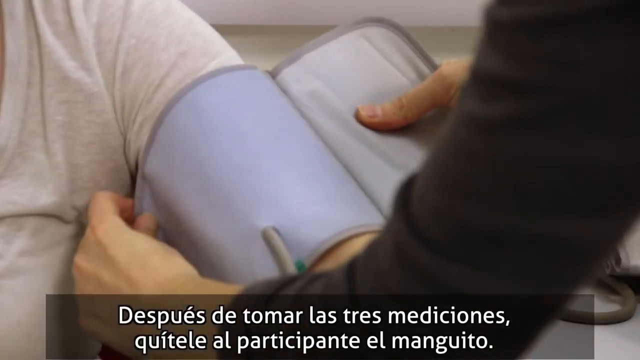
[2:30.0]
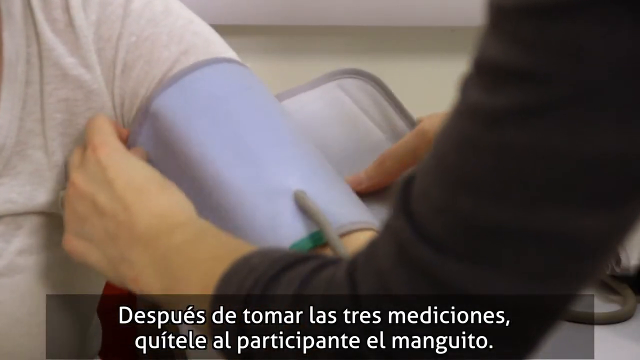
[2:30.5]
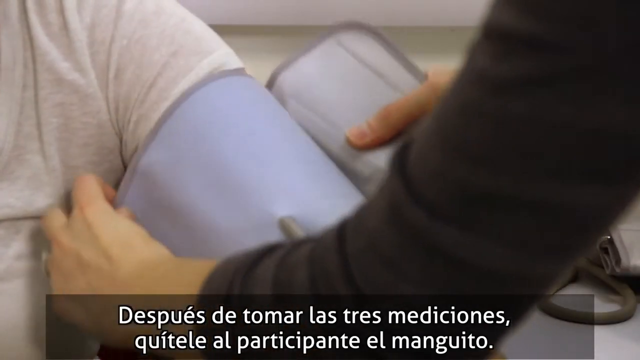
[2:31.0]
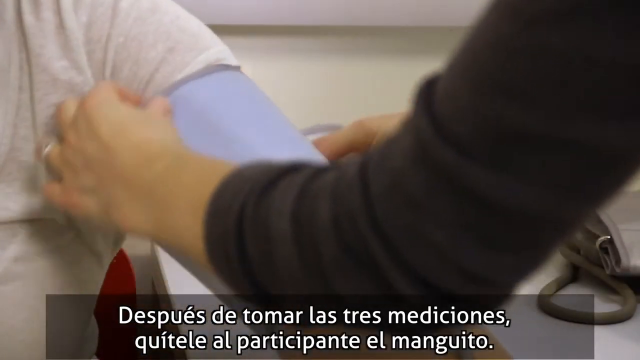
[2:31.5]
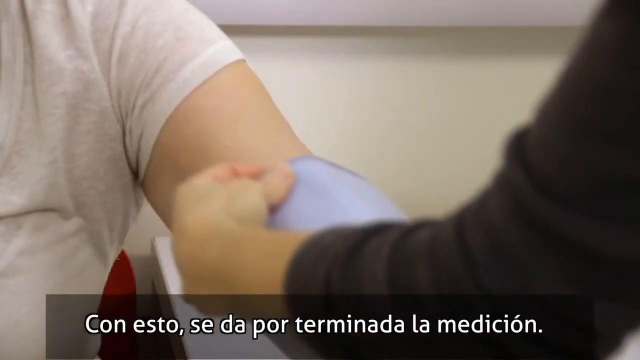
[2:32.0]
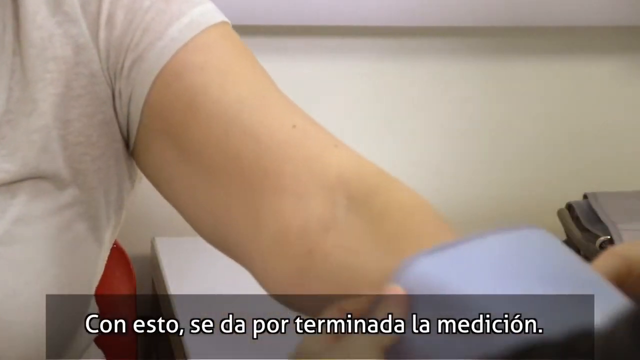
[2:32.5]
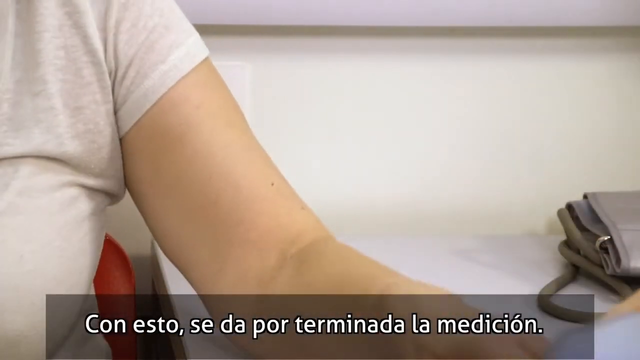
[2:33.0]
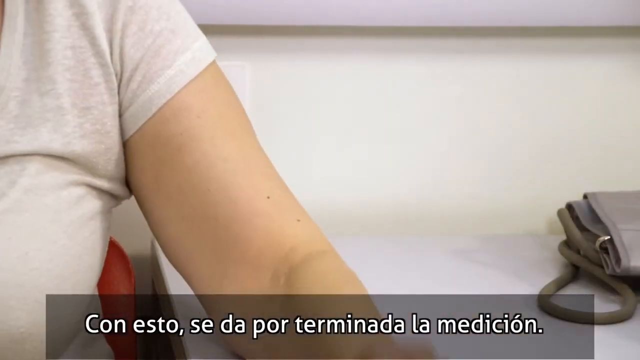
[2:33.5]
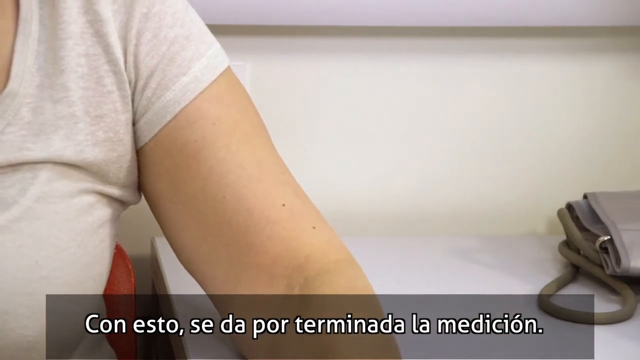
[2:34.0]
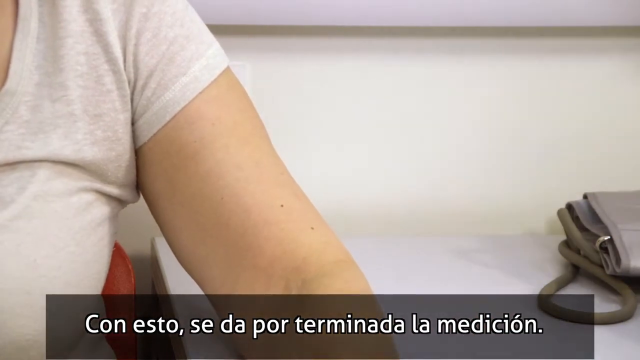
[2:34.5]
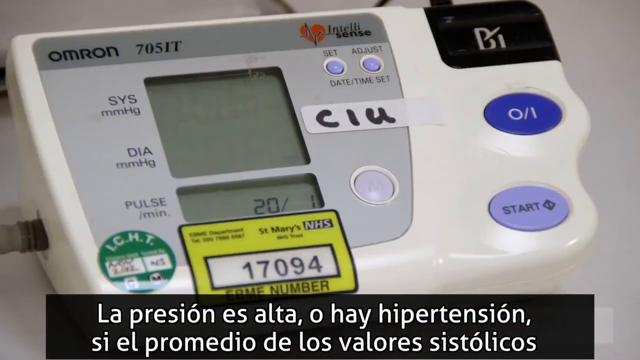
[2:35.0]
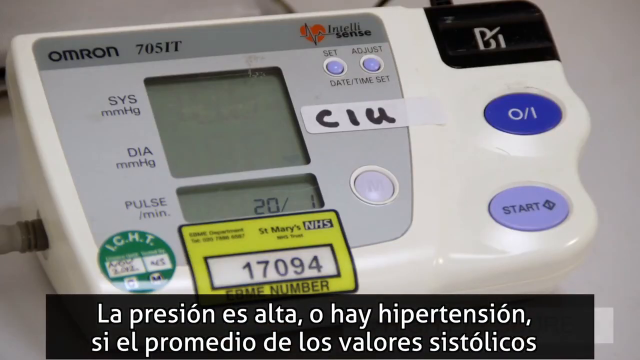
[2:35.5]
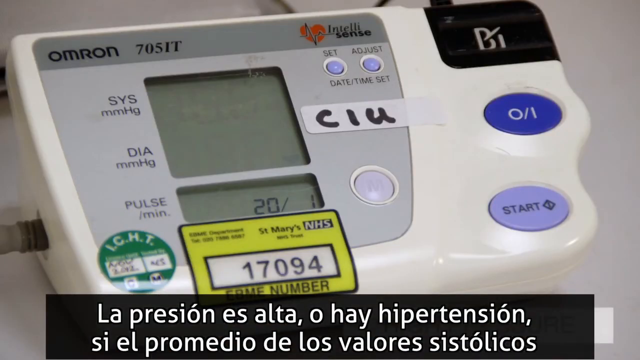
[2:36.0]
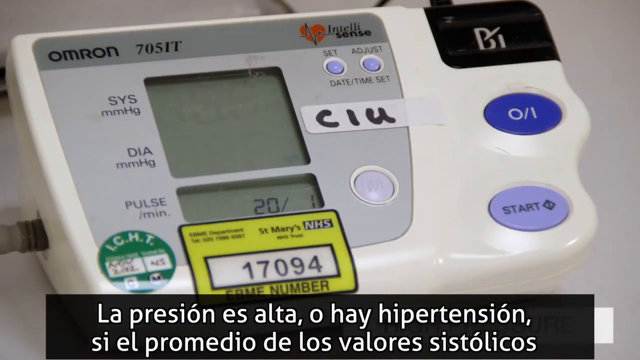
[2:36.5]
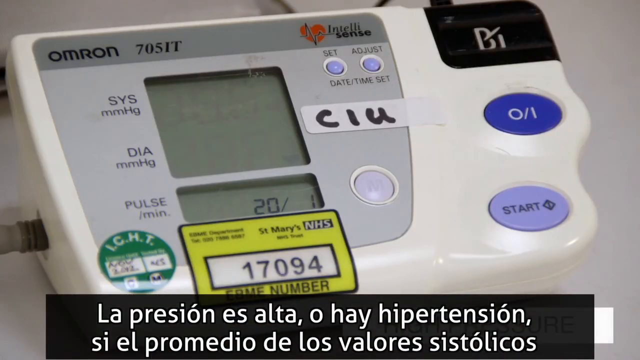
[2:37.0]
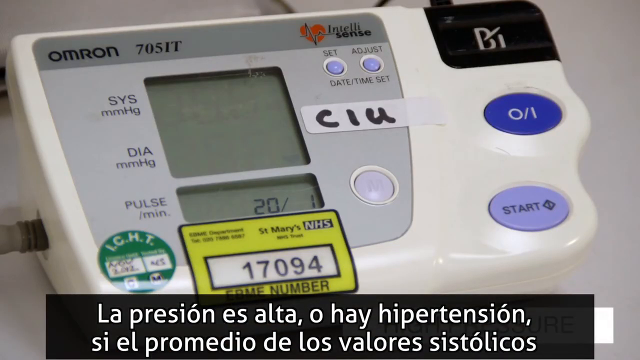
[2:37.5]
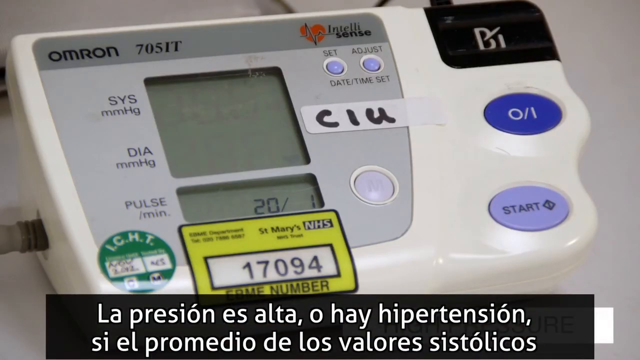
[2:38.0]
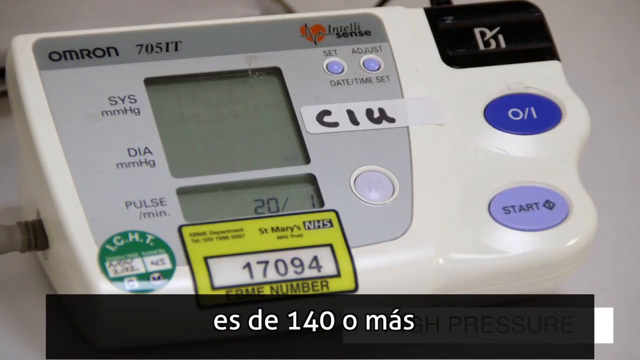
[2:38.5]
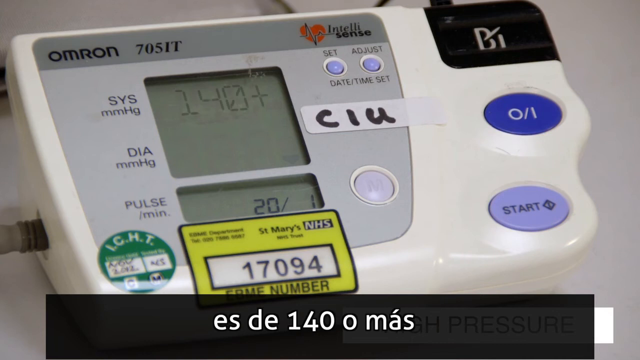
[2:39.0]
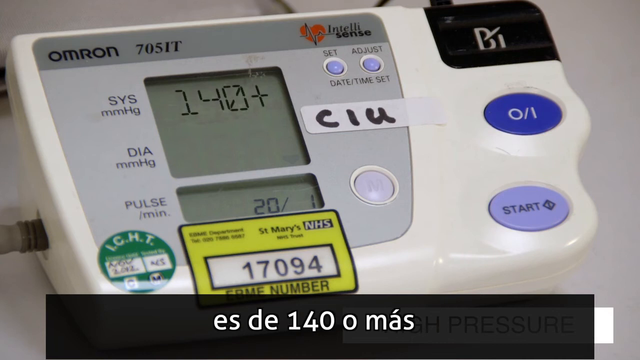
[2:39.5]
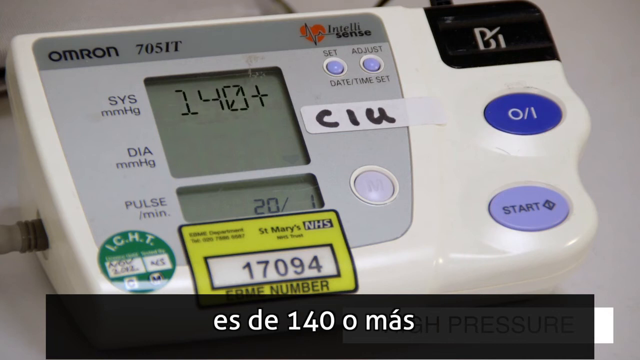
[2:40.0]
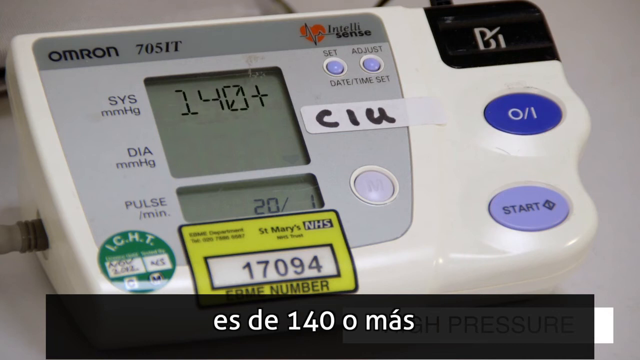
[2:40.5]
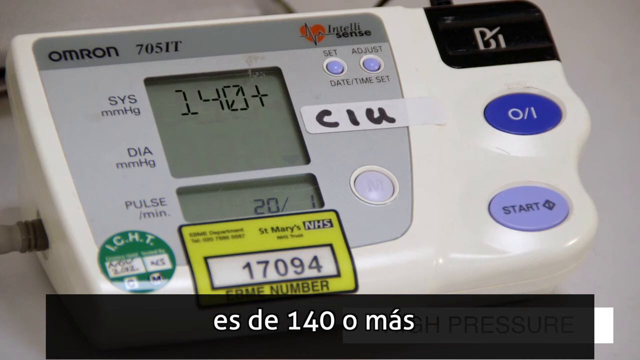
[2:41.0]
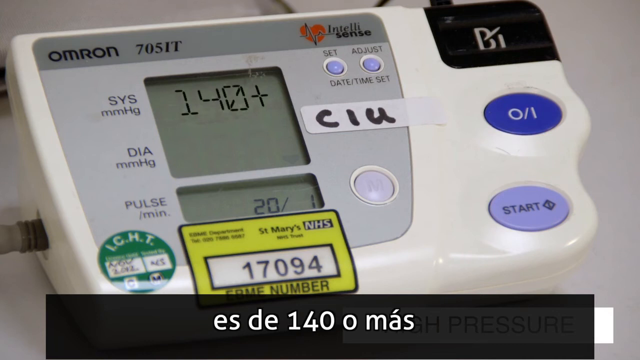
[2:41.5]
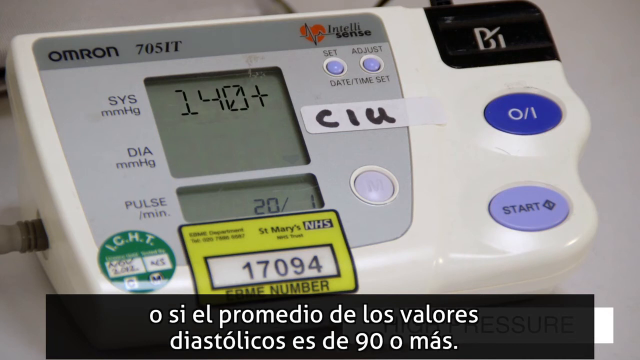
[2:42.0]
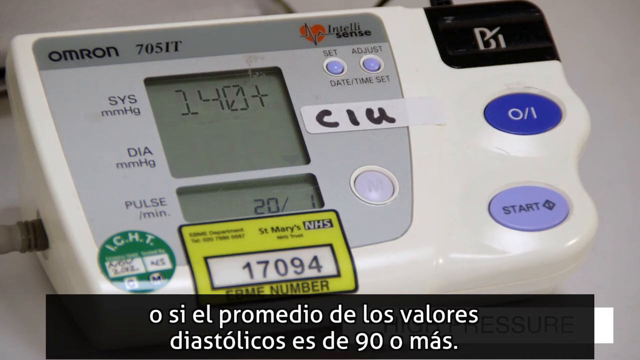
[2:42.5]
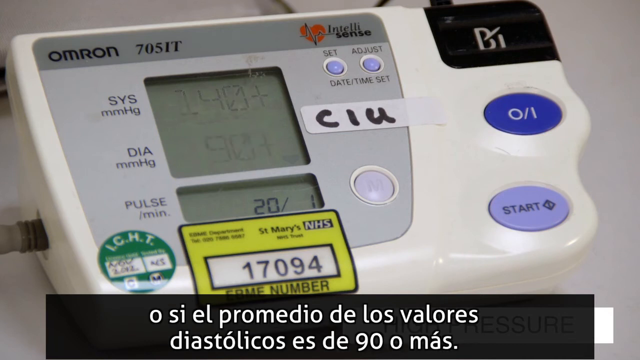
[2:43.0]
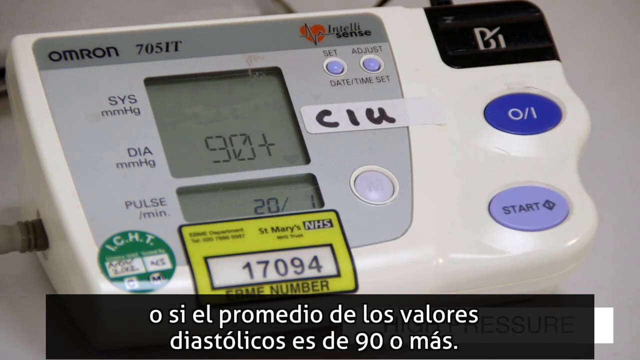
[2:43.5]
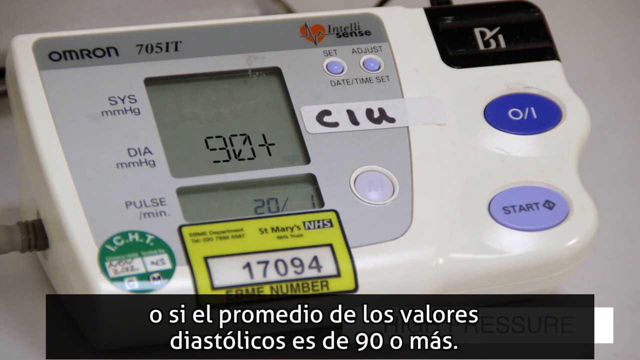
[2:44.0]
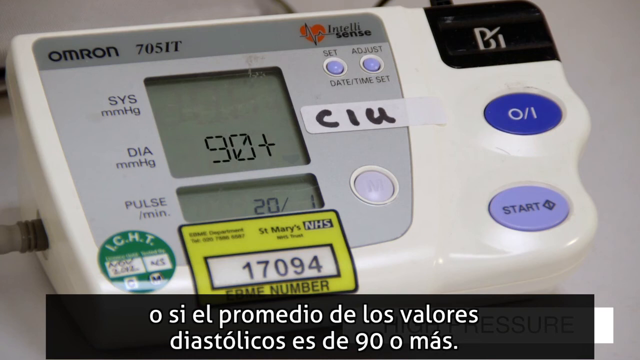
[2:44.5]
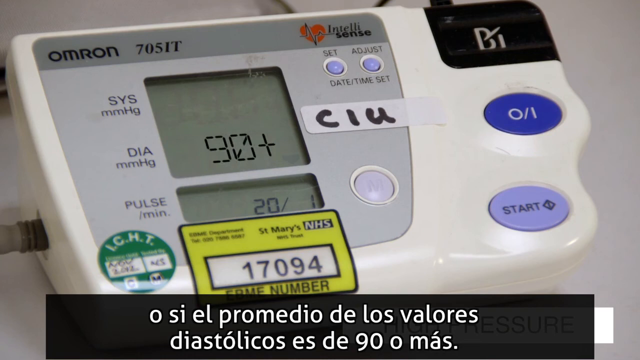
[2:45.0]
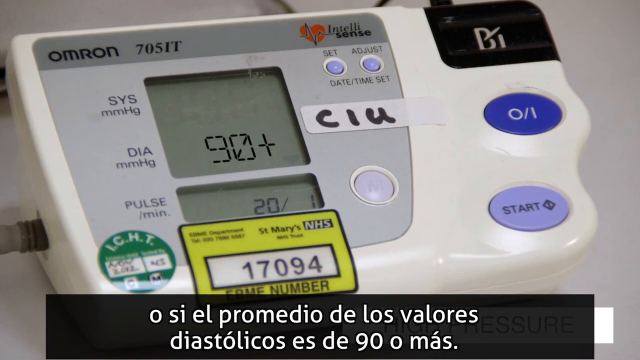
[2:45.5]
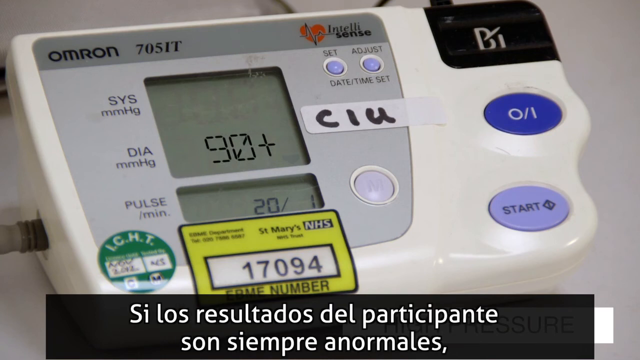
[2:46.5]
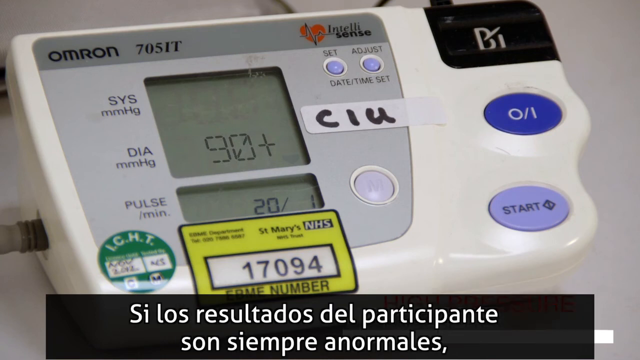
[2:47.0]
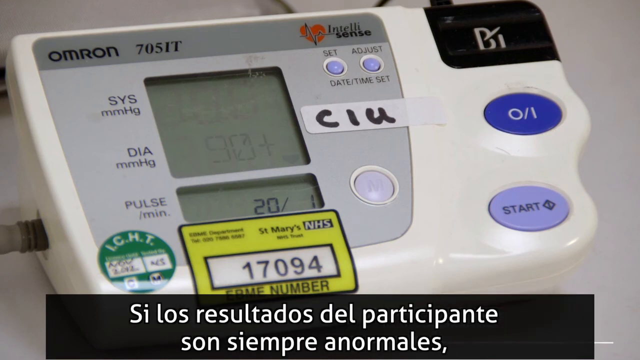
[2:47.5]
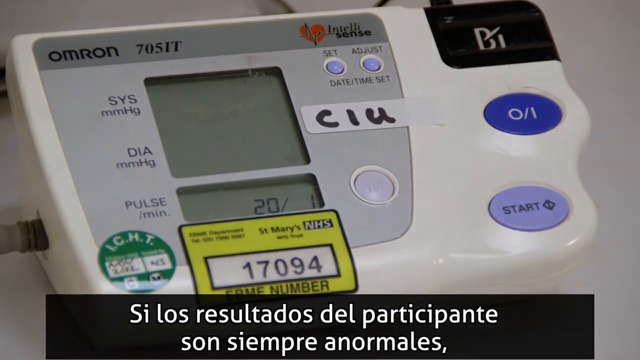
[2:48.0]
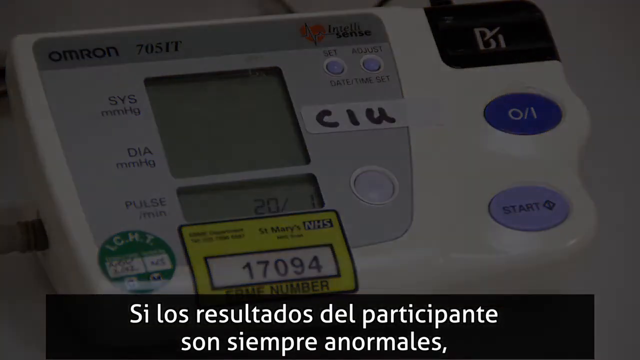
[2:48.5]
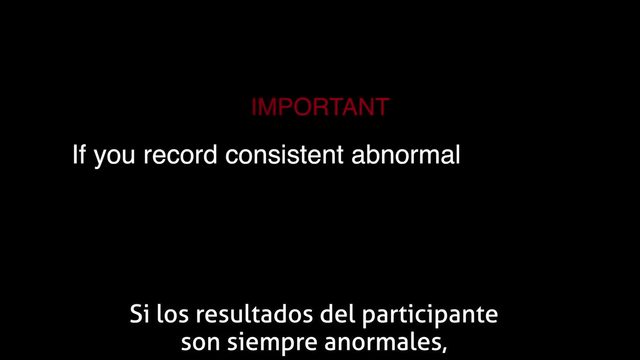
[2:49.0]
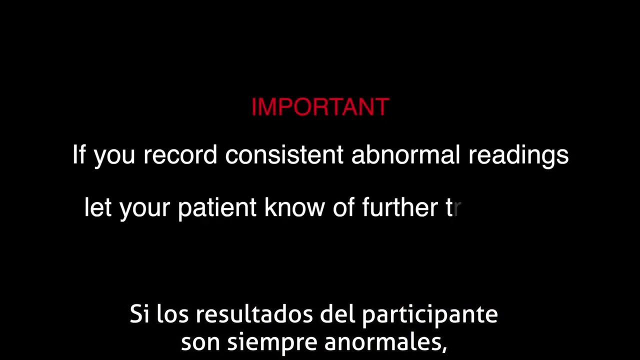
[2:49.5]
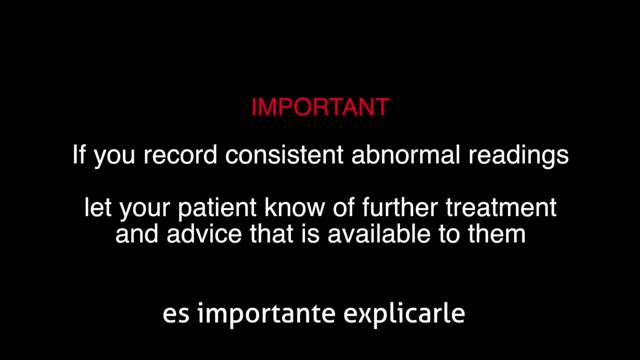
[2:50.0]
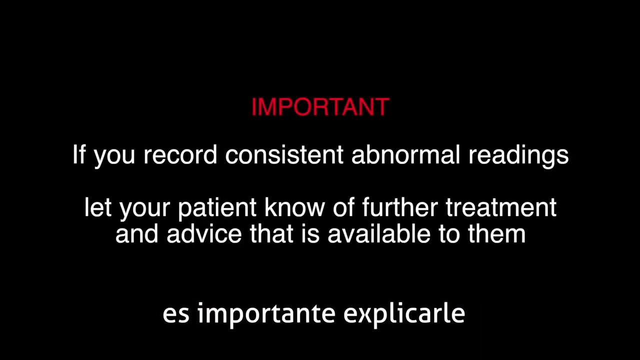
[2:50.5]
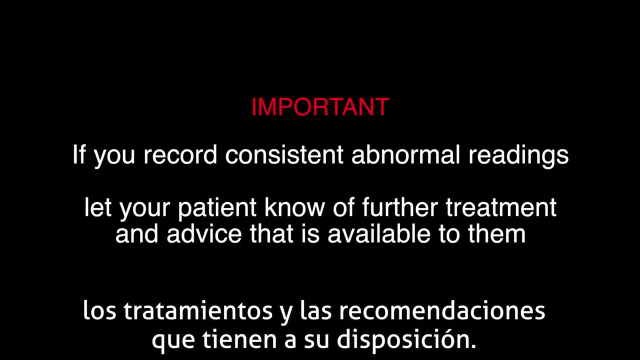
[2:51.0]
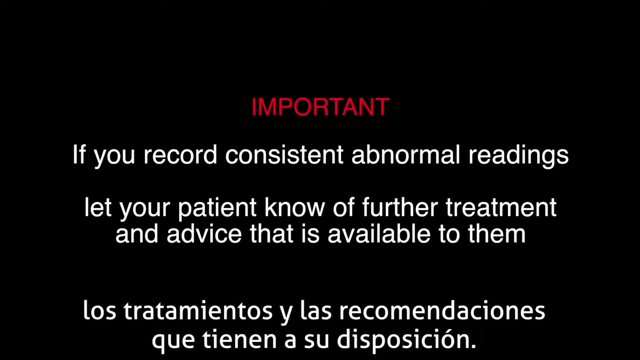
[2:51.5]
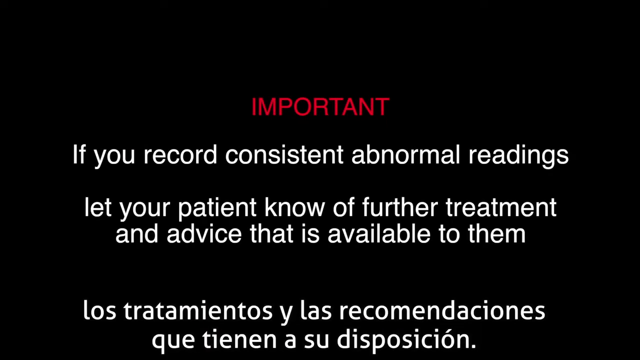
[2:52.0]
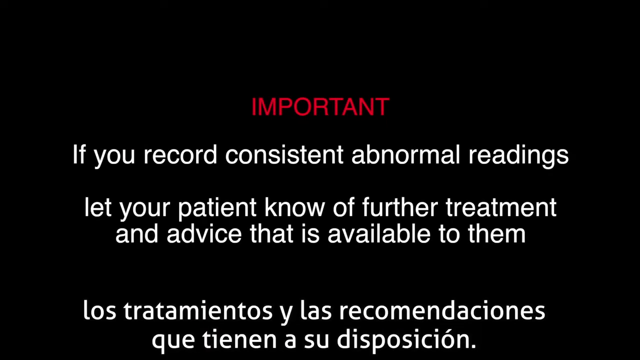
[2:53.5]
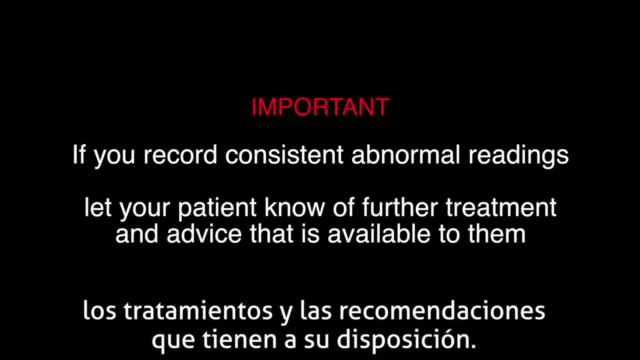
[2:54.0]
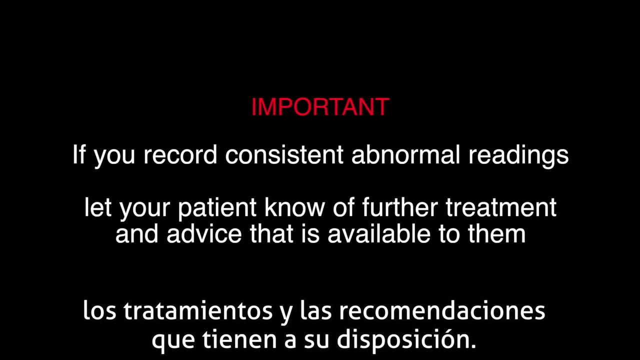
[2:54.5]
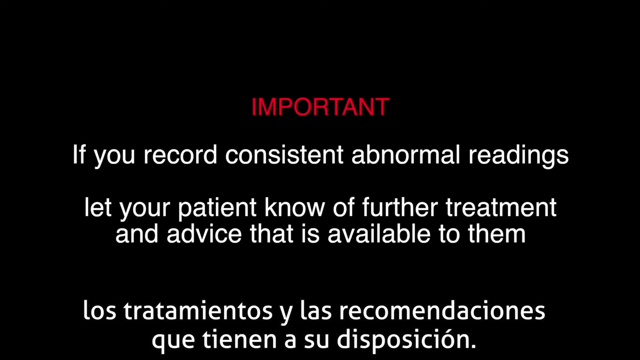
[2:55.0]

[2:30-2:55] A person in a dark long-sleeved sweater takes a blood pressure cuff off a woman wearing a V-neck, short-sleeved, whitish-gray sweater. The monitor shows "140 plus" and "90 plus." Red letters then read "important," and below them white letters appear almost as if being typed: "if you record consistent abnormal readings, let your patient know of further treatment and advice that is available to them." Spanish captions run across the bottom. The cuff is light blue and its attached cord is gray.